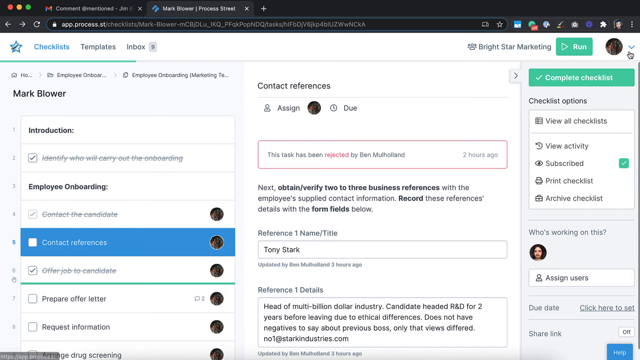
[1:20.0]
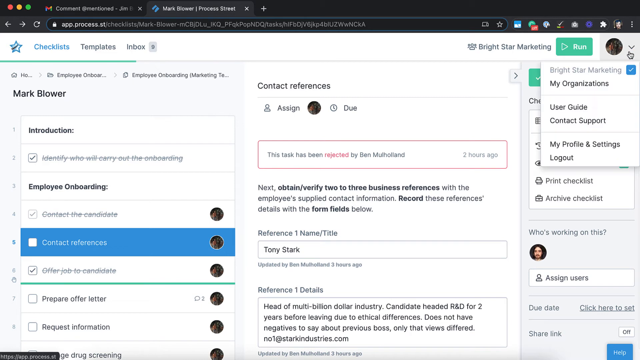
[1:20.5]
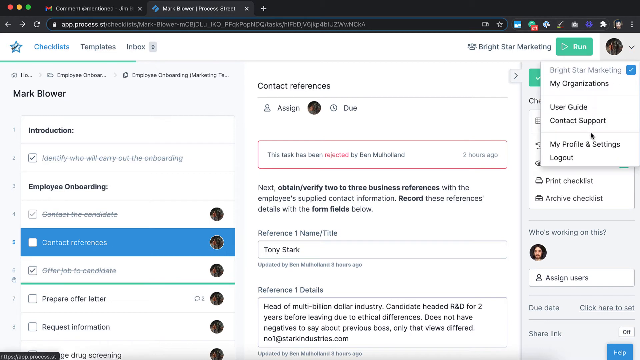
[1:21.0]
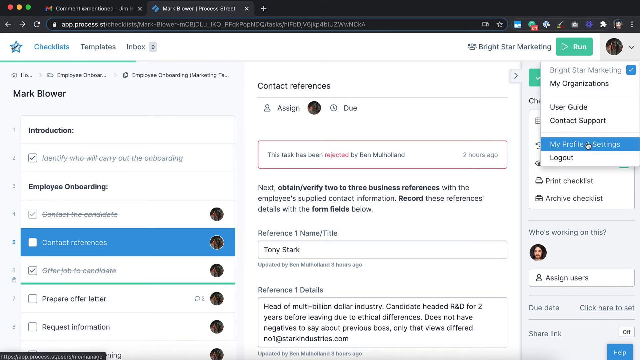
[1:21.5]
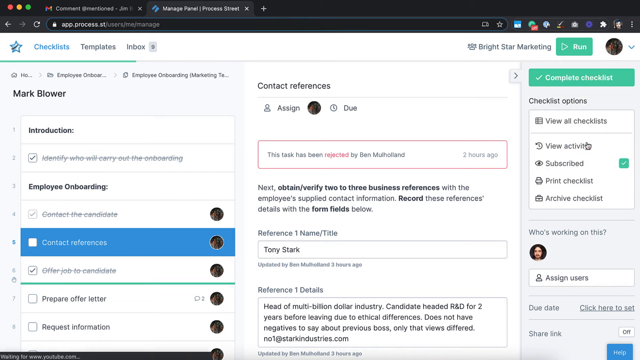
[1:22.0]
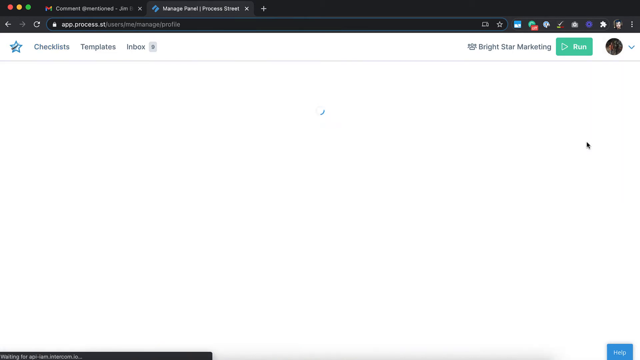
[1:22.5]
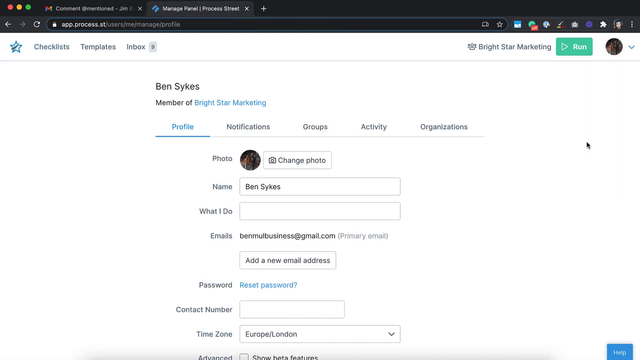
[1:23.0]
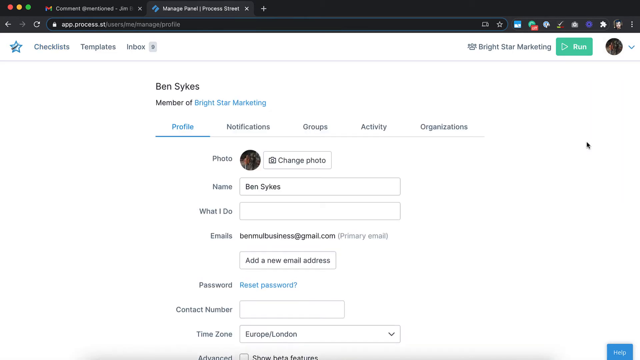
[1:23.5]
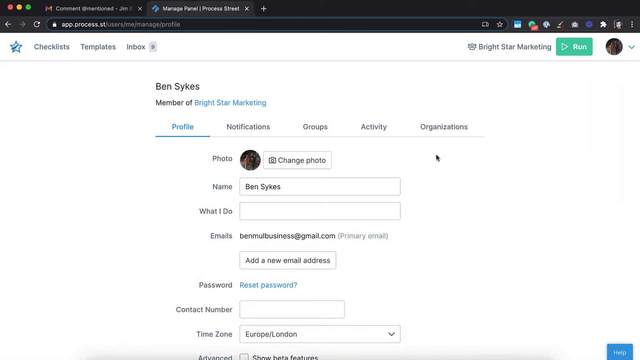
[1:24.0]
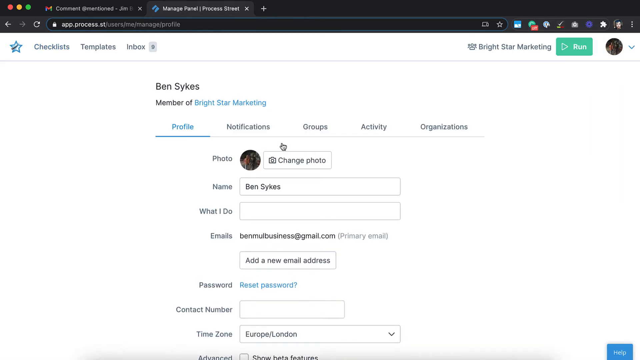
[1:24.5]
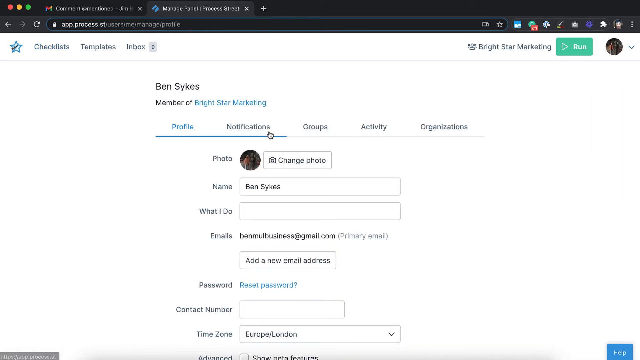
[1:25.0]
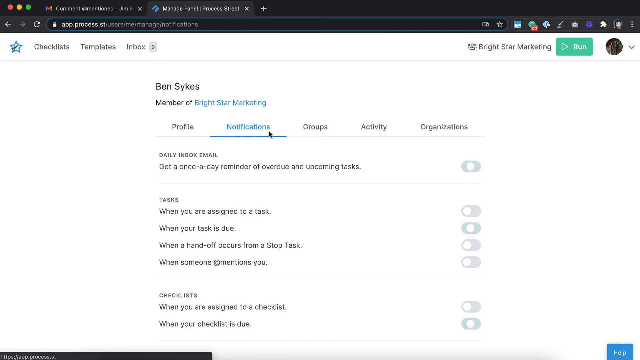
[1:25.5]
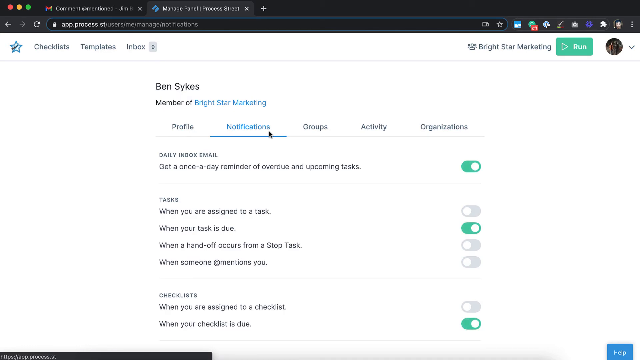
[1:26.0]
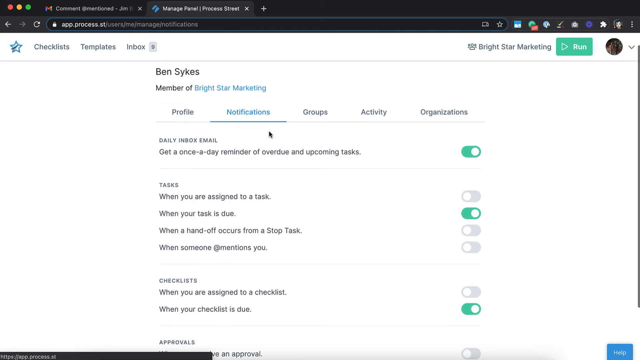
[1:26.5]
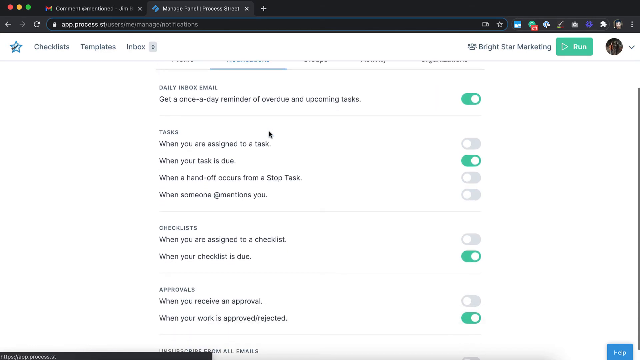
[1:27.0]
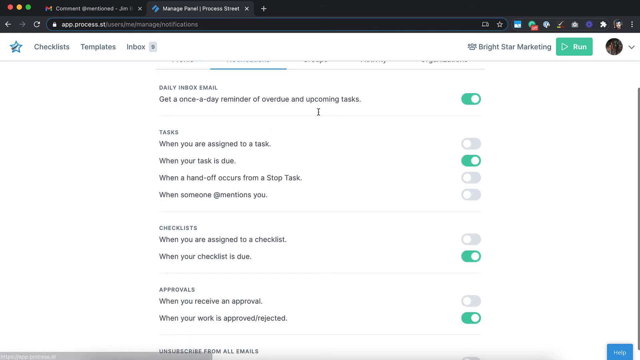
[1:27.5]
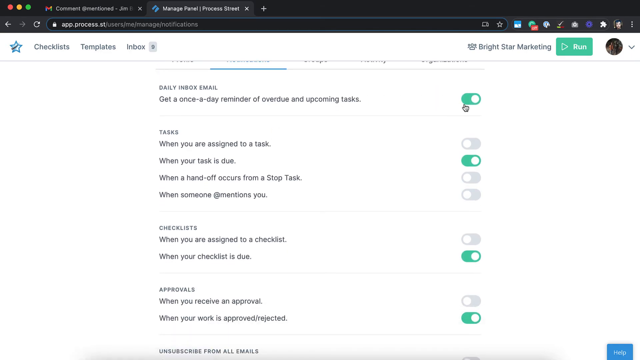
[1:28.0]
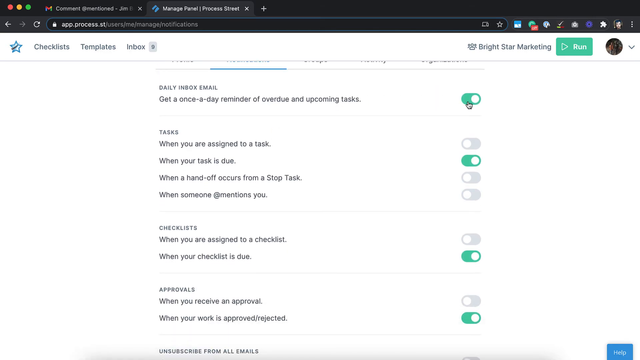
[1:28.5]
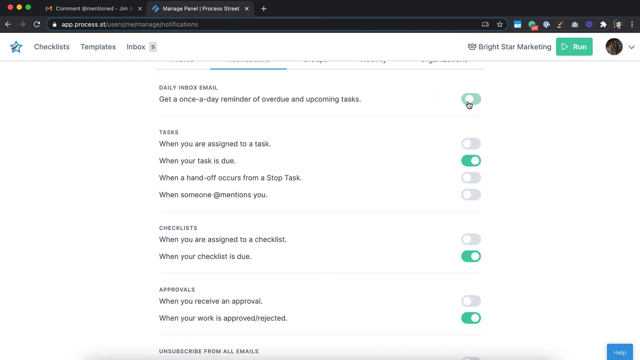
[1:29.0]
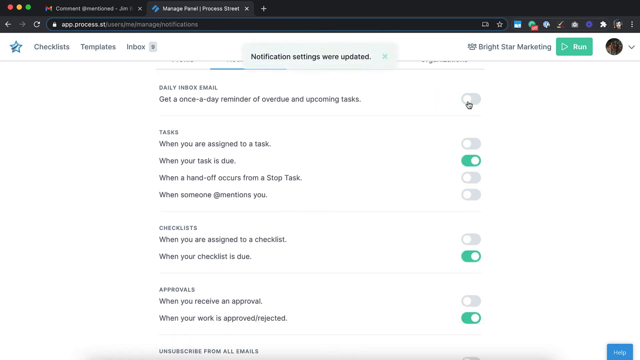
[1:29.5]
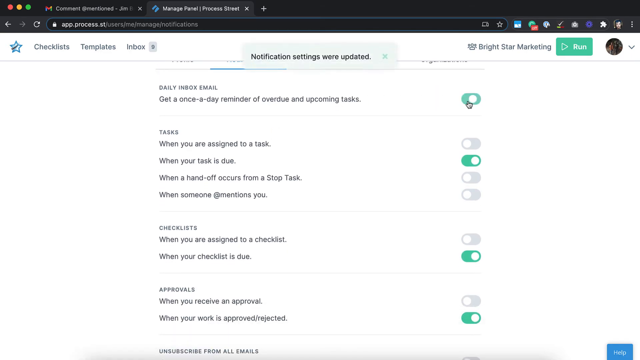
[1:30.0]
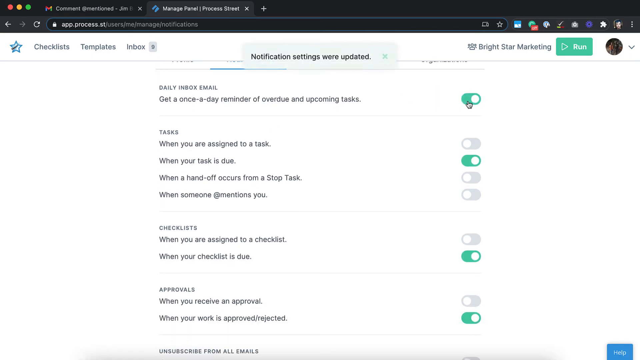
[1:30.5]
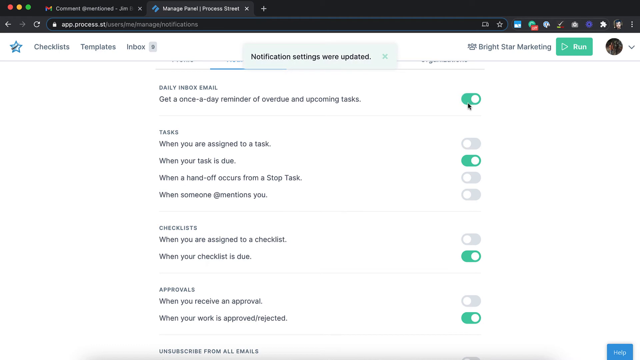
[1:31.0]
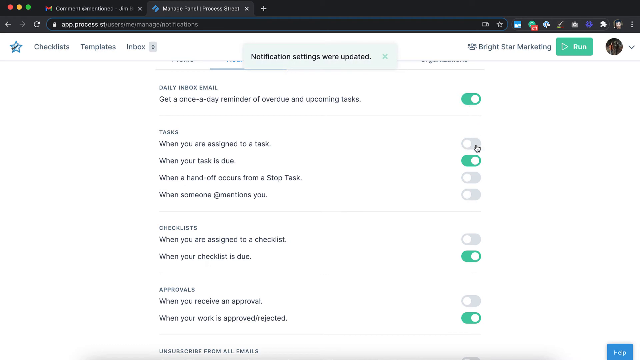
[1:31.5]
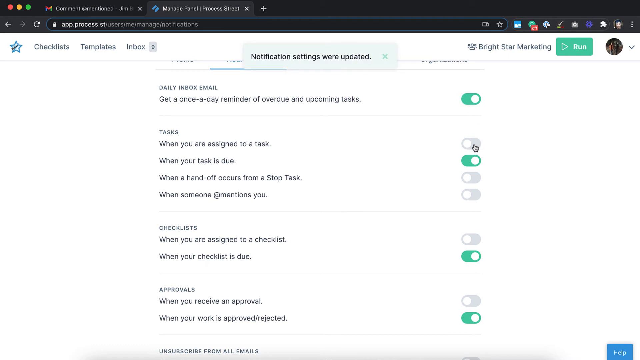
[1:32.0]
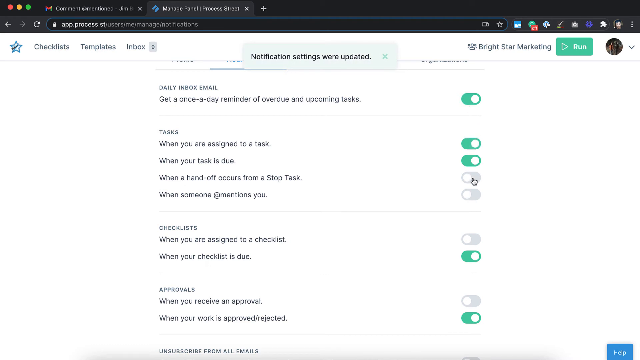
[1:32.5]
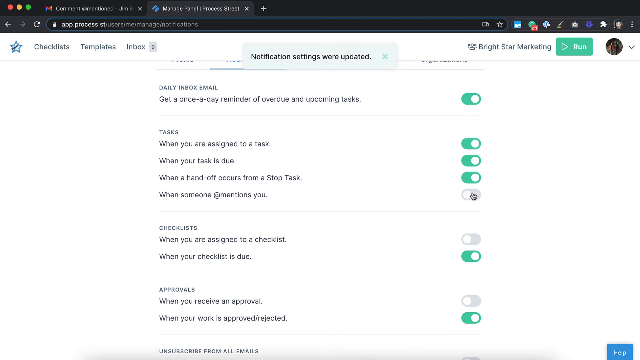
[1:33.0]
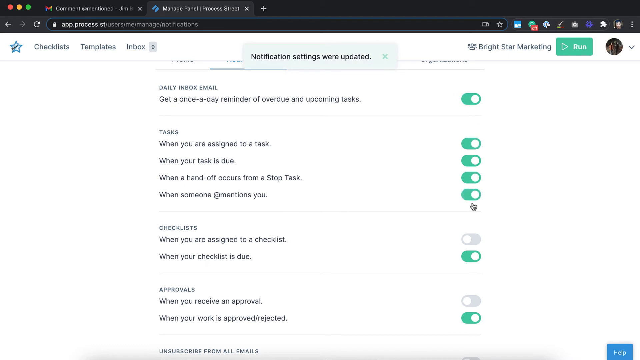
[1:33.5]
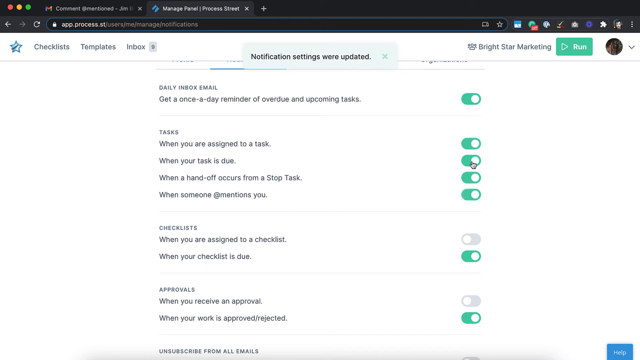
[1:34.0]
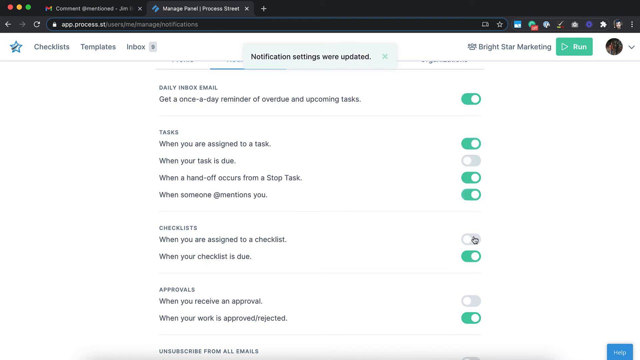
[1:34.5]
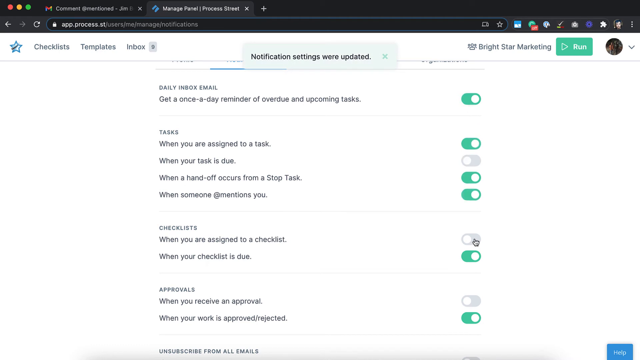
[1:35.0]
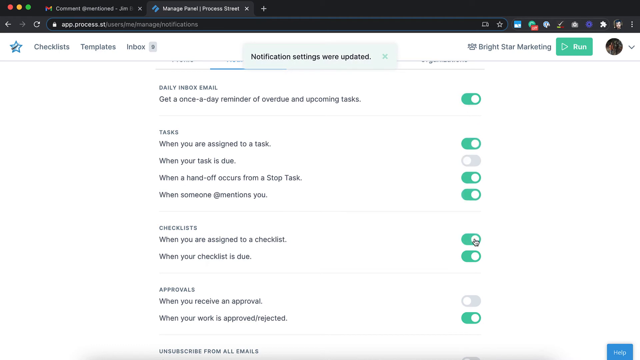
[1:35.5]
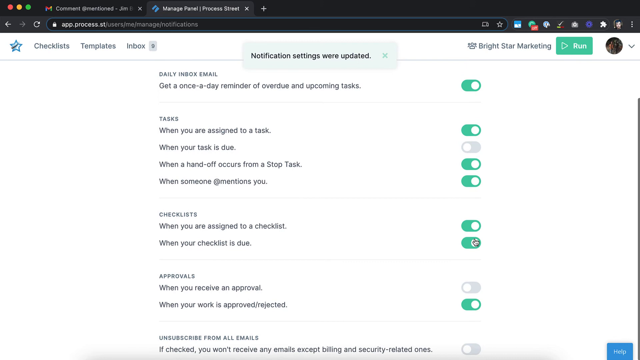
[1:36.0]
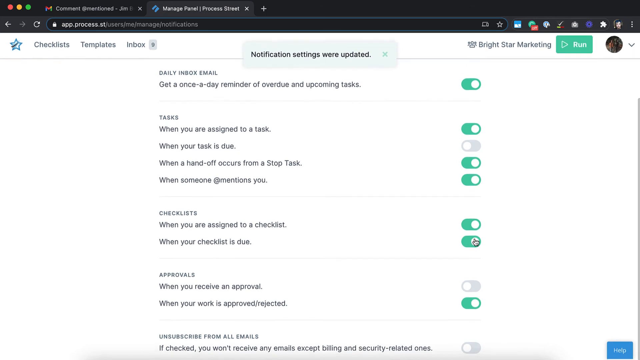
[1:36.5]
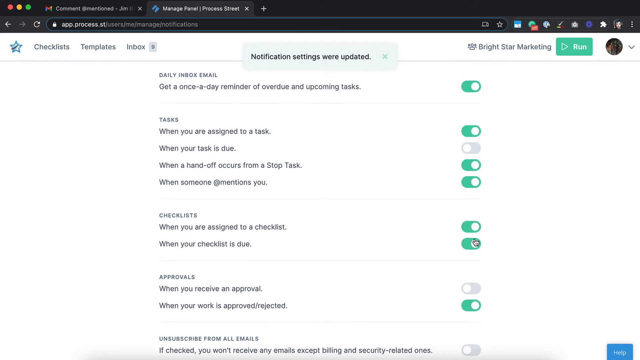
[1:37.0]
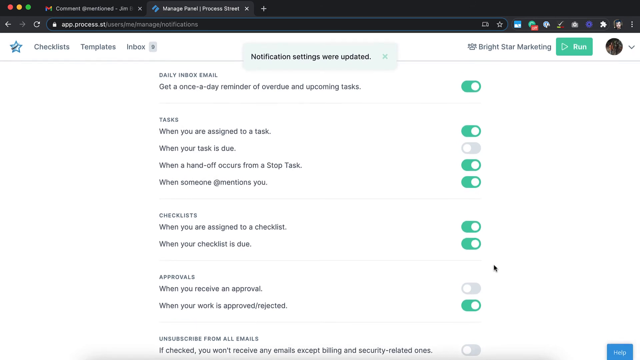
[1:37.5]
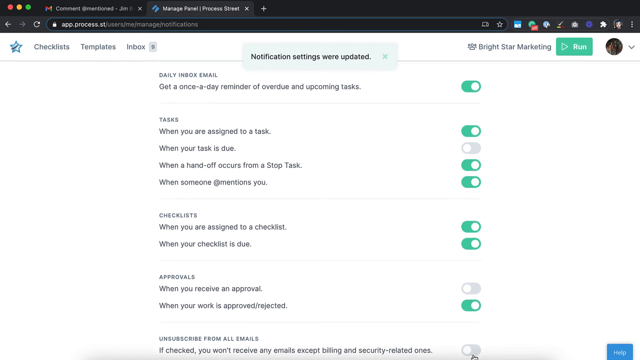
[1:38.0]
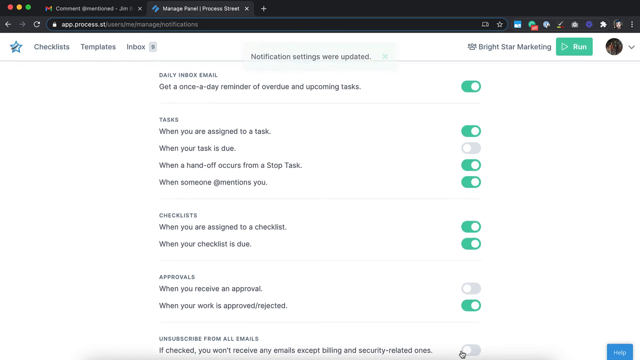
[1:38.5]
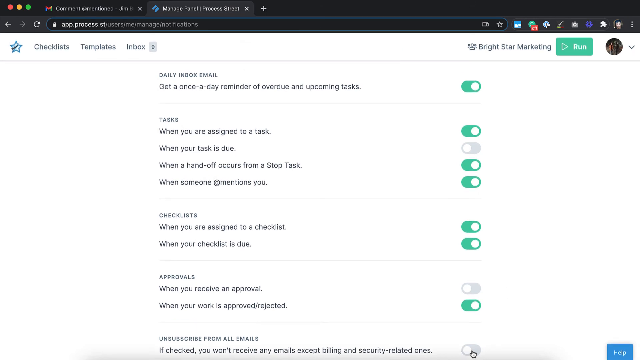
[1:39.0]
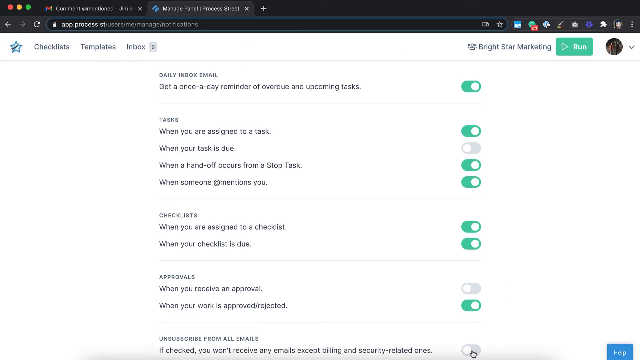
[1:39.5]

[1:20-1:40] On the task website, the person works through a checklist. The current step, "contact references", is highlighted in blue on the left, and in the center to the right the process to follow reads: "next, obtain and verify two to three business references with the employee supplied contact information. Record those references details with the form fields below." The person has begun filling in the form fields. They then go to the notification settings within the app and toggle notifications on and off for this task. This is some type of promotional video showing how the task website works.